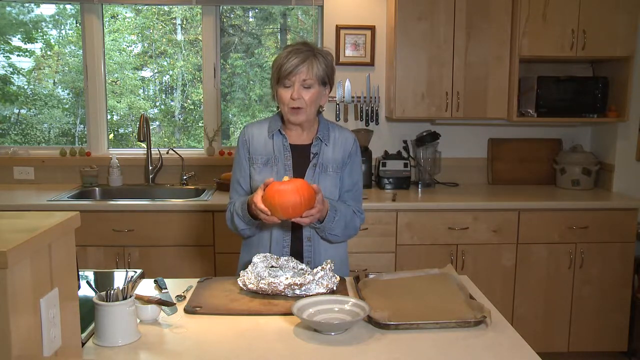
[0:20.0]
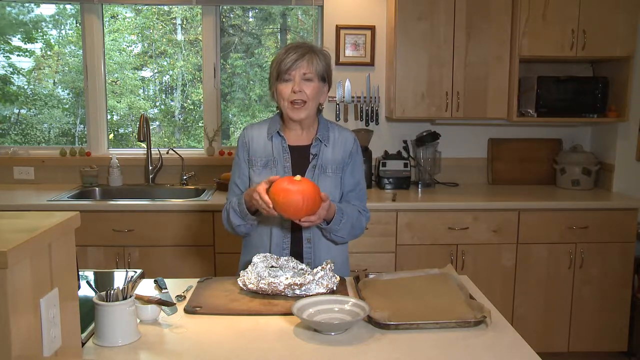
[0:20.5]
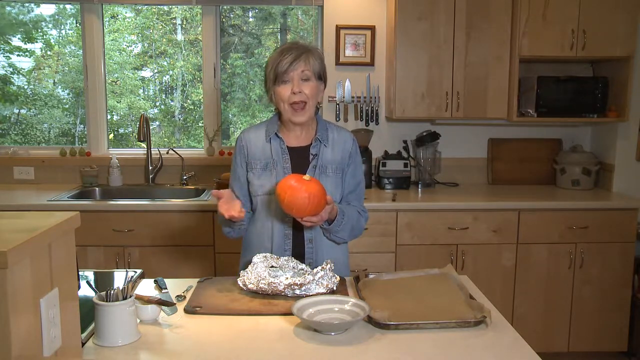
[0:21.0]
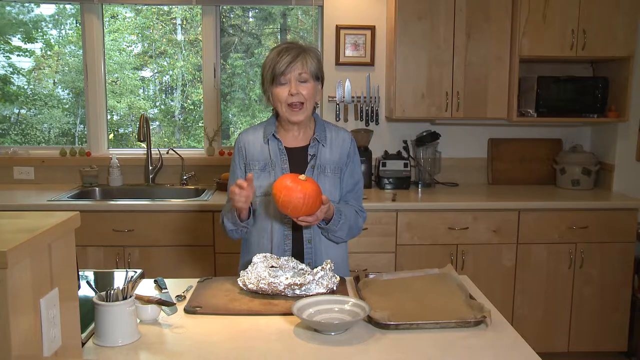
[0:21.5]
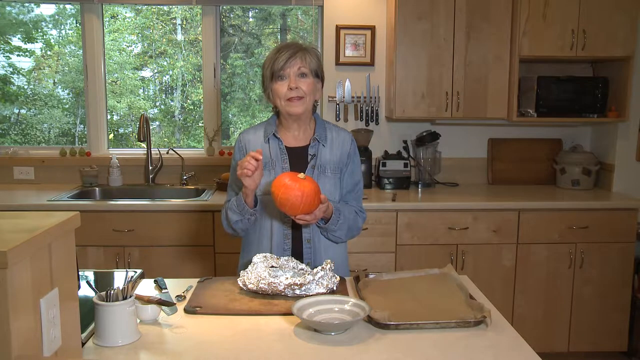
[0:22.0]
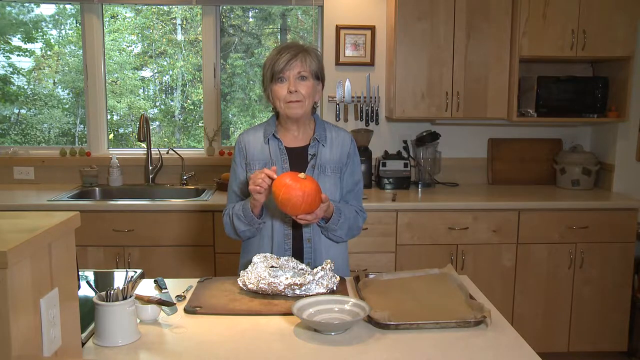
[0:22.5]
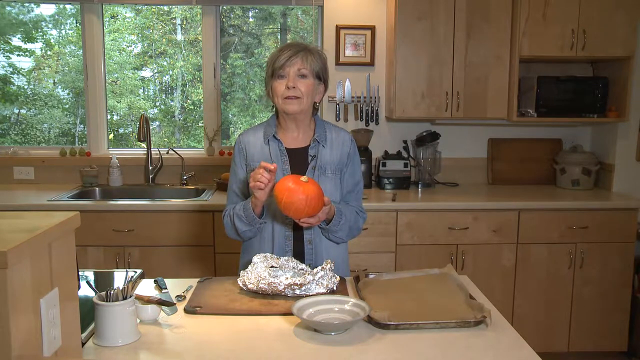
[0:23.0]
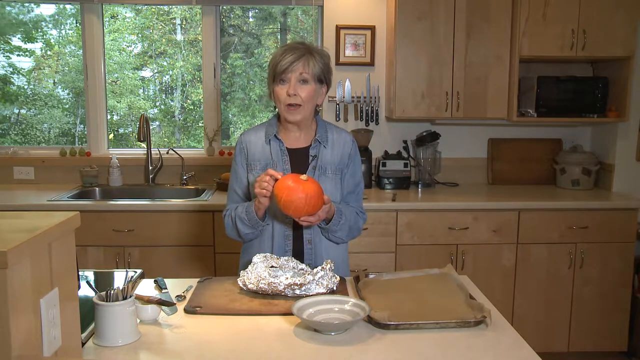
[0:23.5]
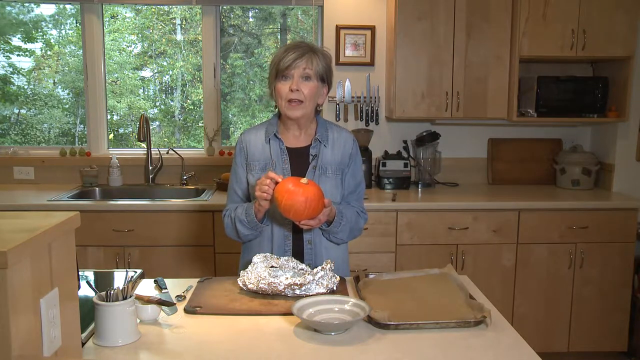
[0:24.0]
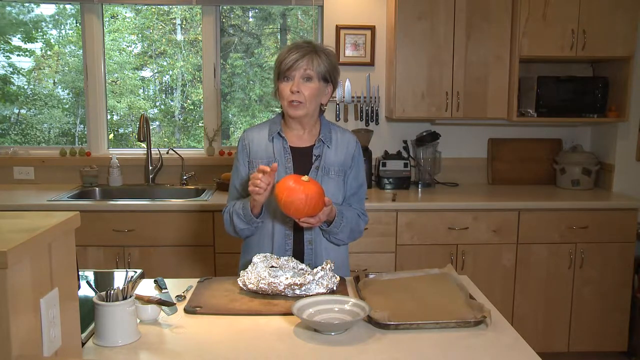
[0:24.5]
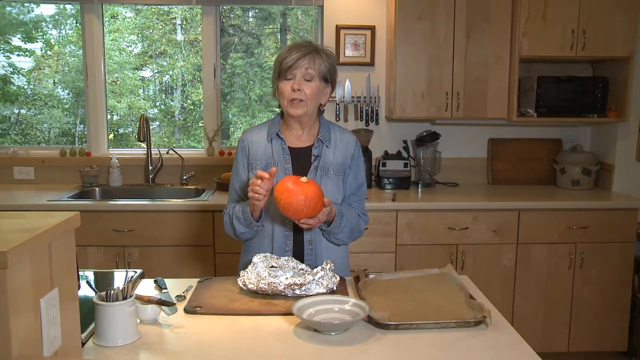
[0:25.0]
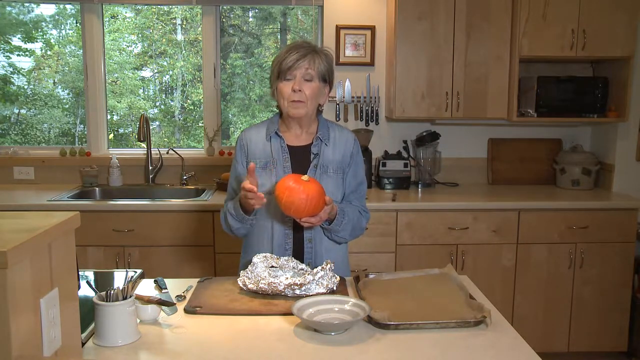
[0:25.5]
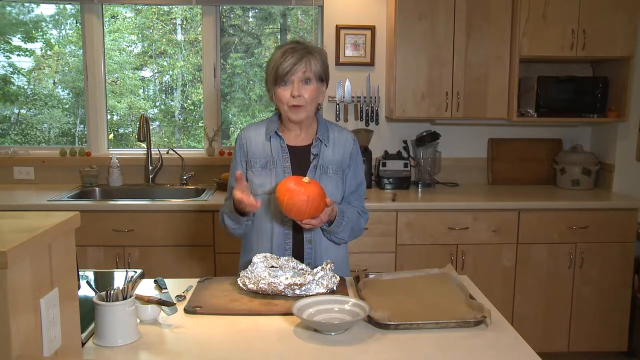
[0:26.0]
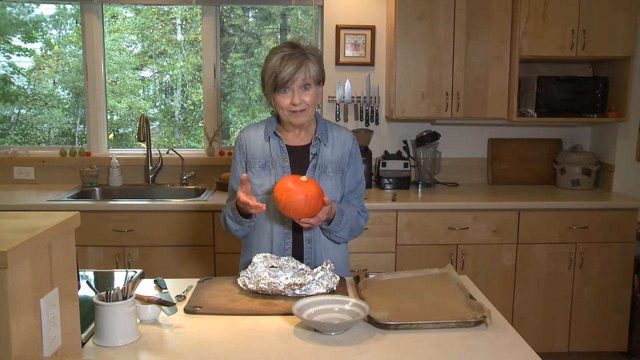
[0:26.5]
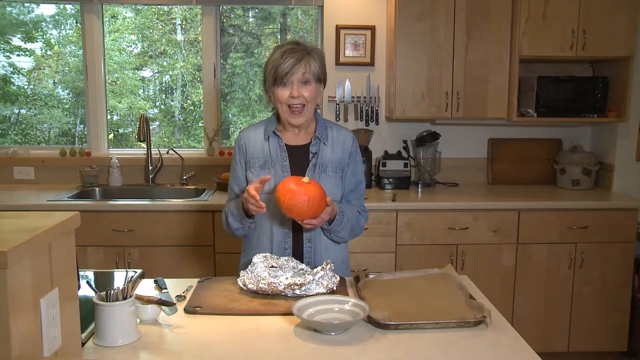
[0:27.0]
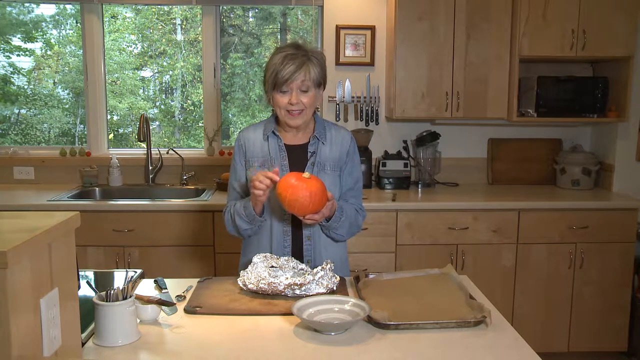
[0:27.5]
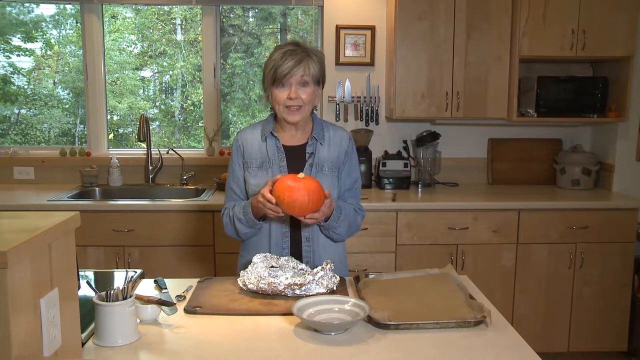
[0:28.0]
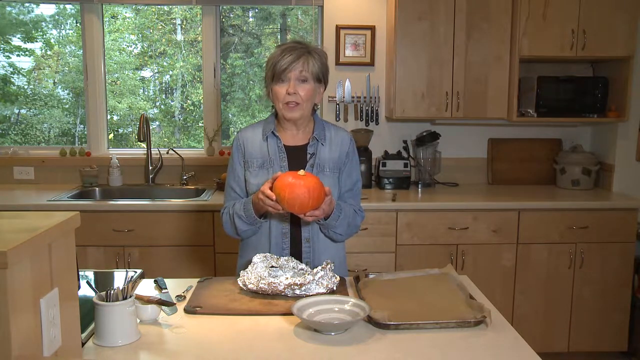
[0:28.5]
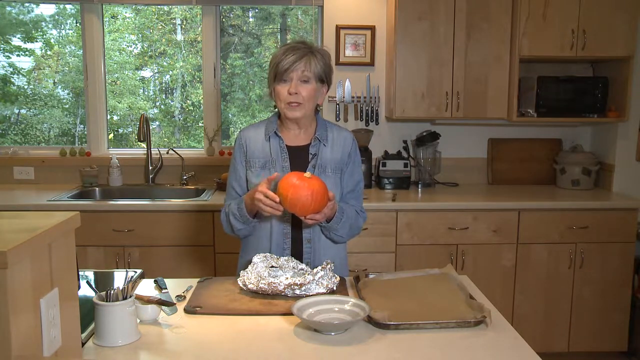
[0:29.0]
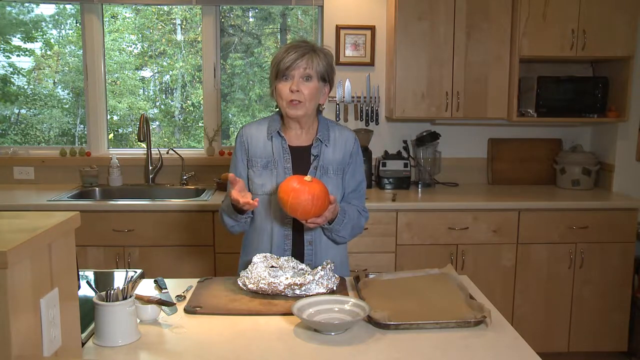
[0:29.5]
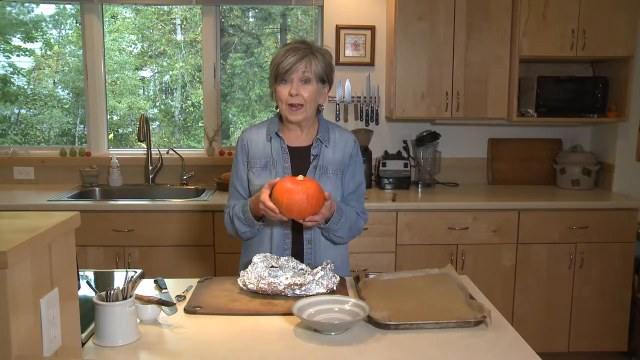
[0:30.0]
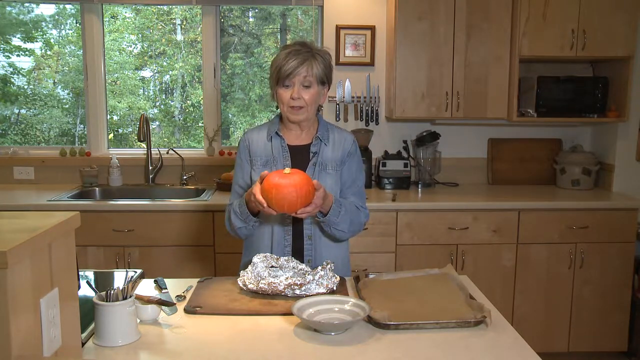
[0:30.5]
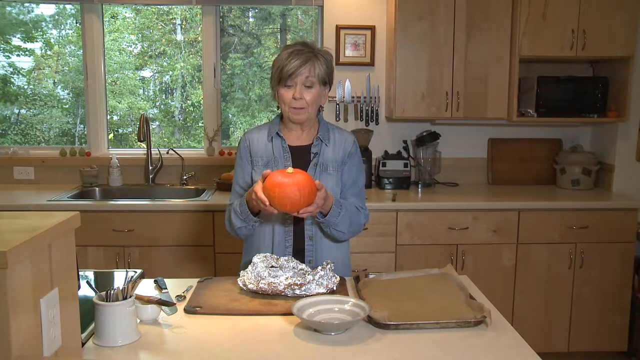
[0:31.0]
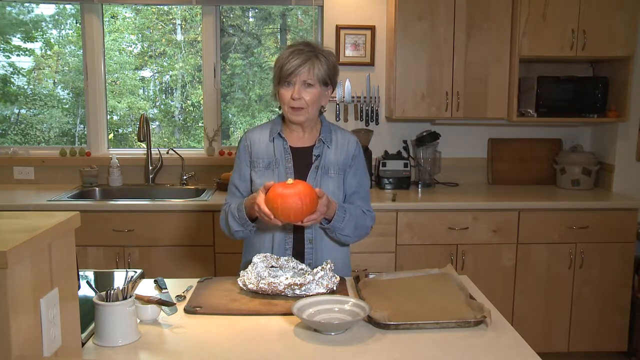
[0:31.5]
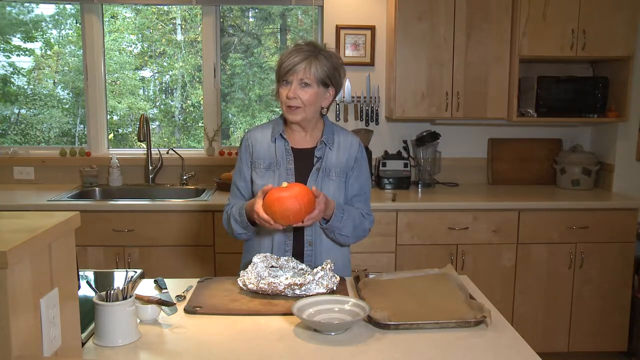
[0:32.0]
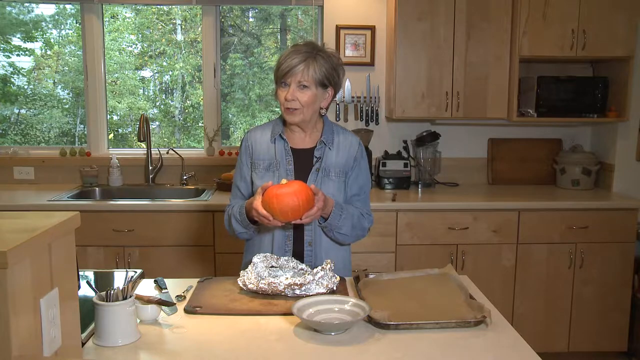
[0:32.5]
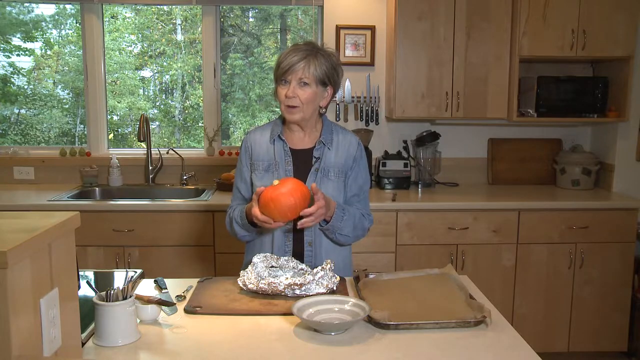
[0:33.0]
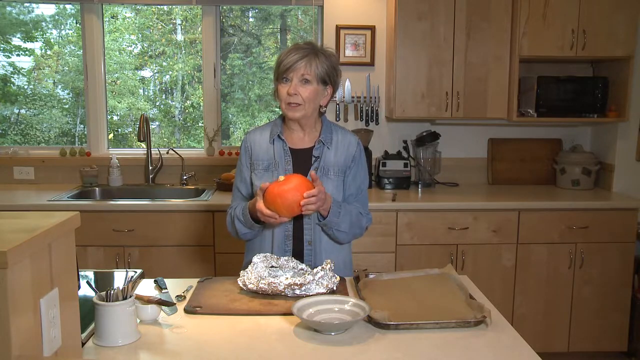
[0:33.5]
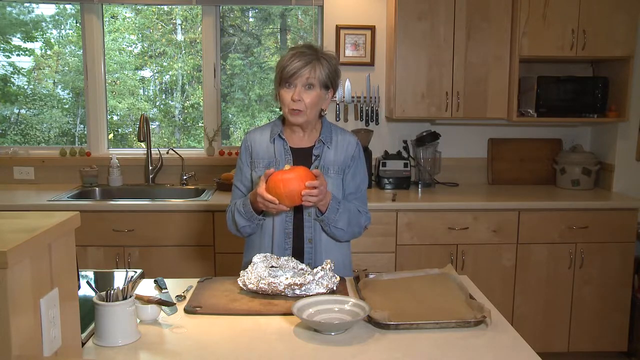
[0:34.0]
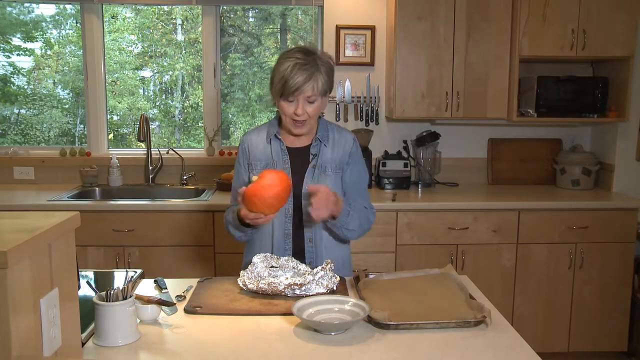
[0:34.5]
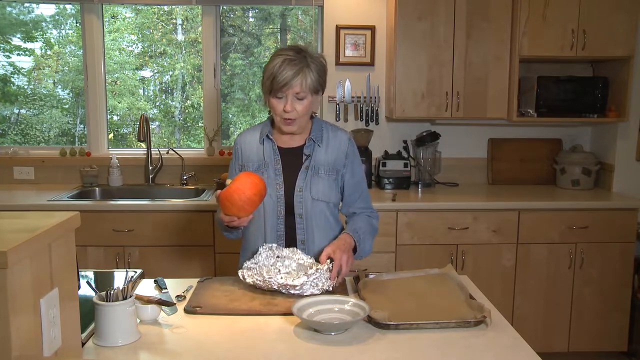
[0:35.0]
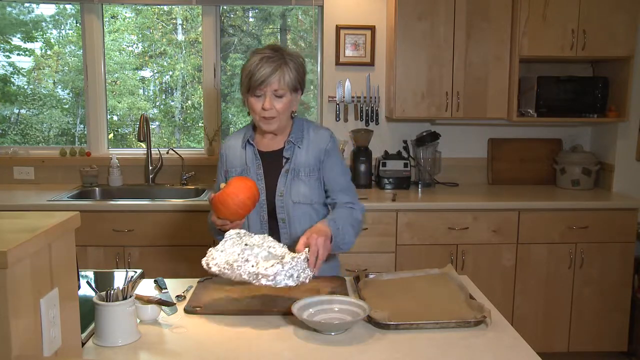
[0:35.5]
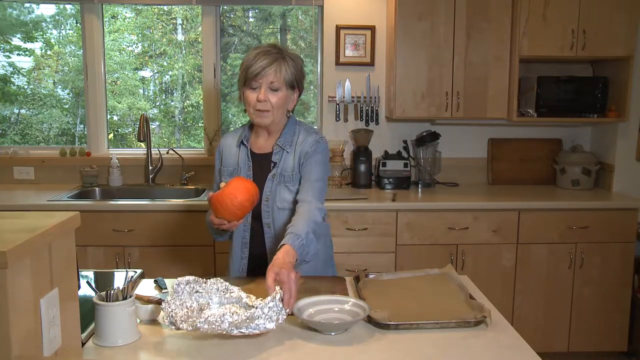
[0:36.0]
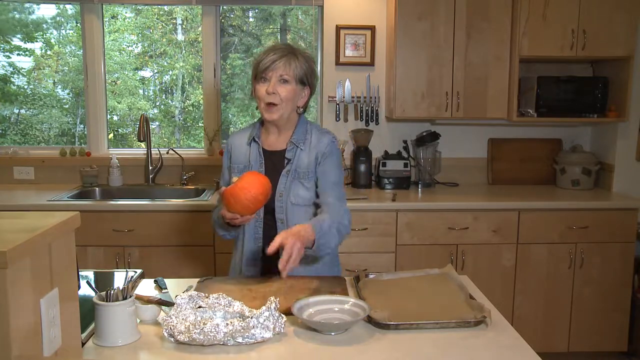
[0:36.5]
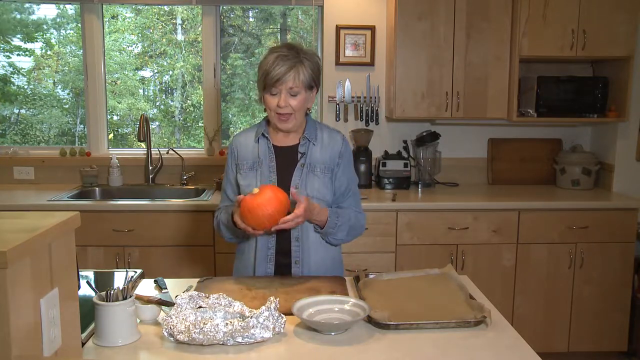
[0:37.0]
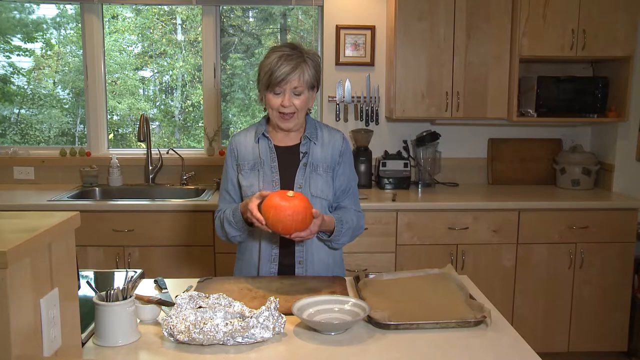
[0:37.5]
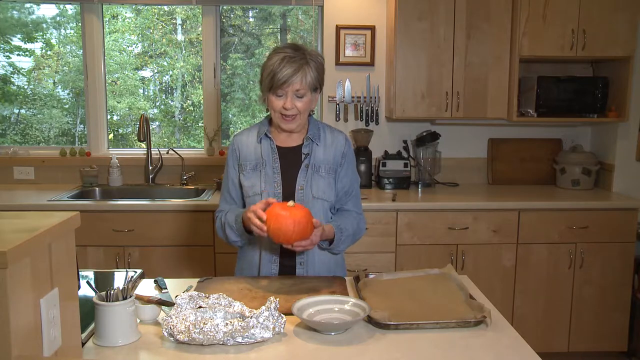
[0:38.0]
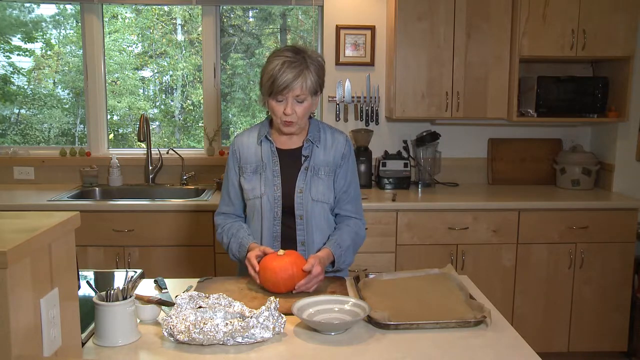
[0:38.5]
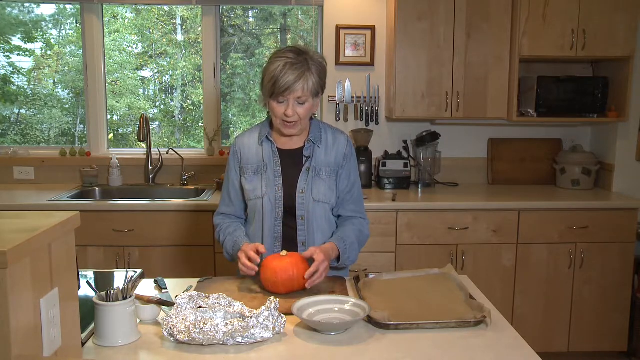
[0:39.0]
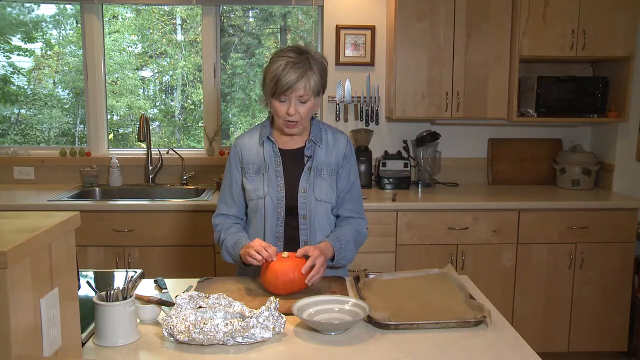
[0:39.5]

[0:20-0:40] The woman holds a small pumpkin, definitely small rather than medium. She also wears a black shirt. A santoku blade lies on the table to her right. Right behind her and a little to the left there is a sink with an overhead spout that goes up, curves over and then goes downward; the sink is silver, so it is probably stainless steel. A white outlet is on the counter next to the sink, and another outlet is visible on the far left, close to the camera. There is also a white jar. With her left hand she moves the foil out of the way and puts the pumpkin down; she appears to be about to do some carving. The foil is really wrinkled, and she sets it away from the cutting board, right next to a striped bowl.